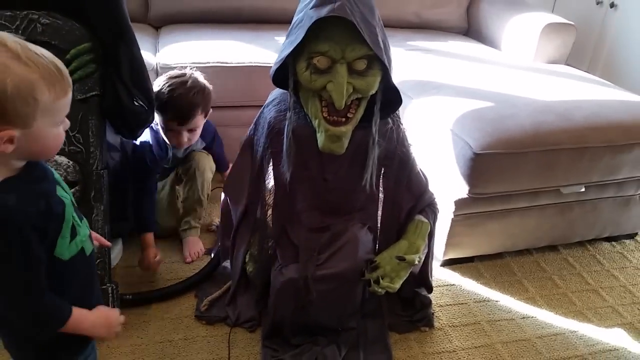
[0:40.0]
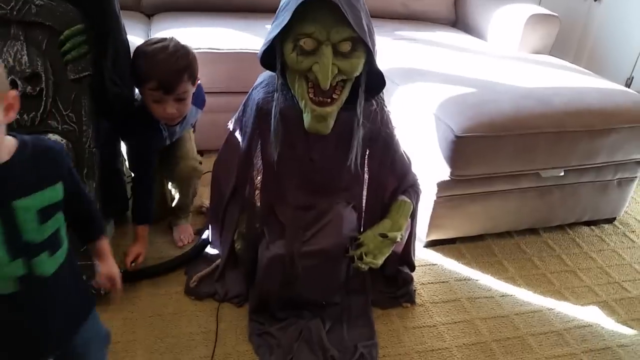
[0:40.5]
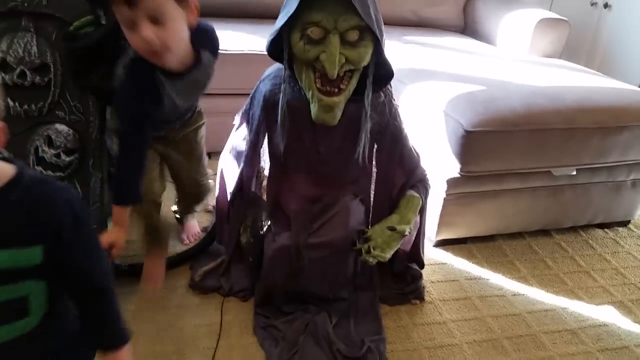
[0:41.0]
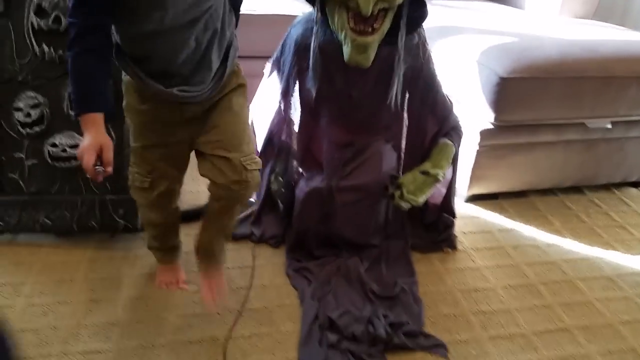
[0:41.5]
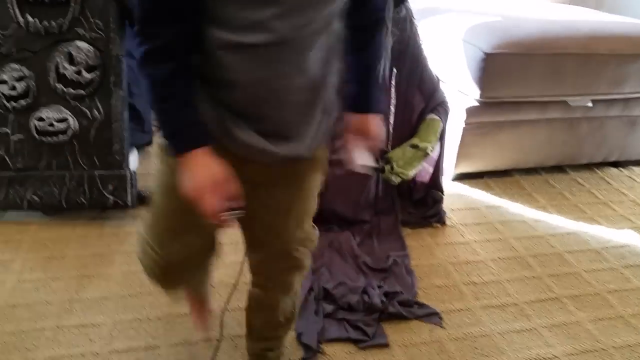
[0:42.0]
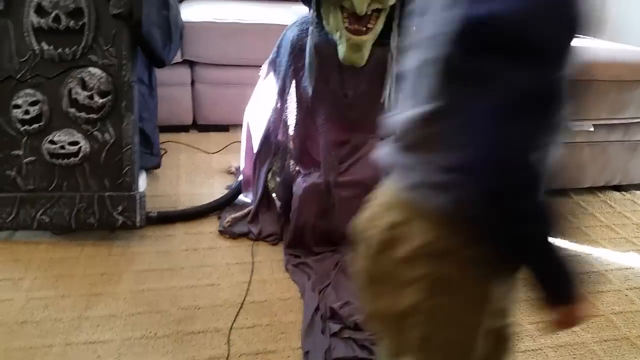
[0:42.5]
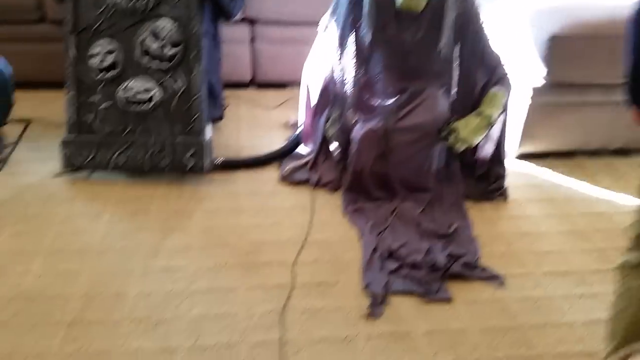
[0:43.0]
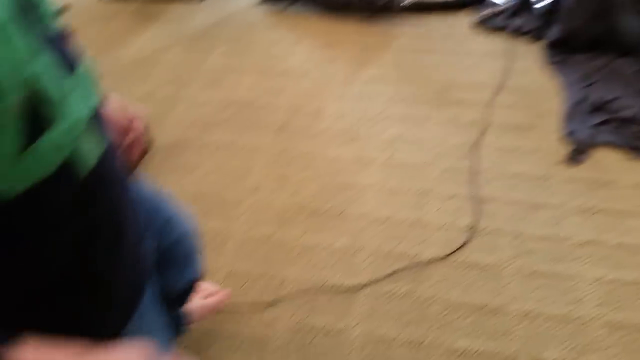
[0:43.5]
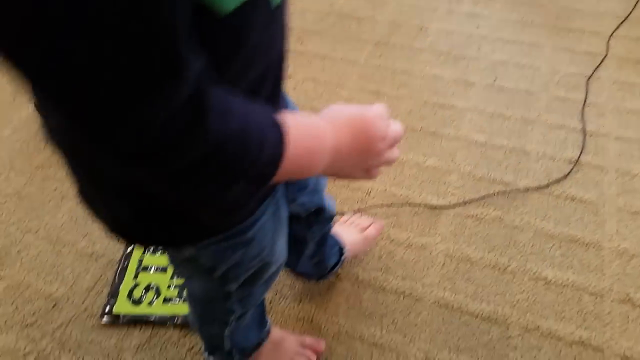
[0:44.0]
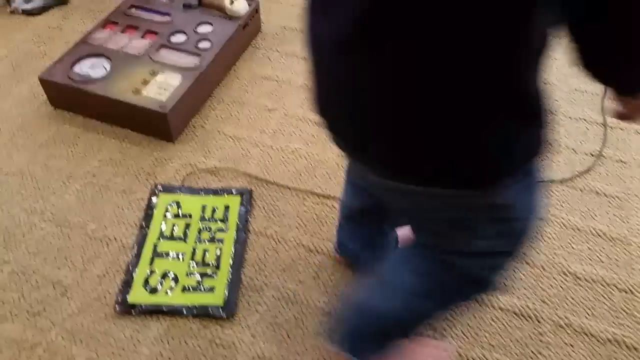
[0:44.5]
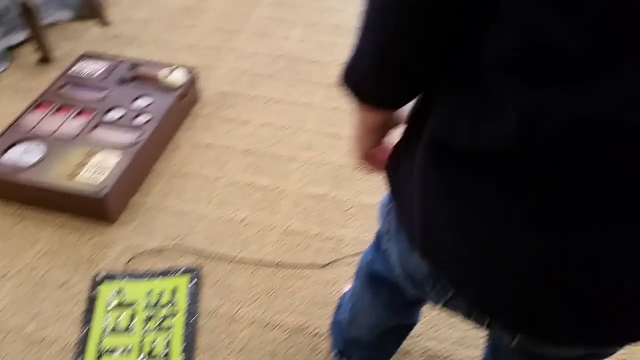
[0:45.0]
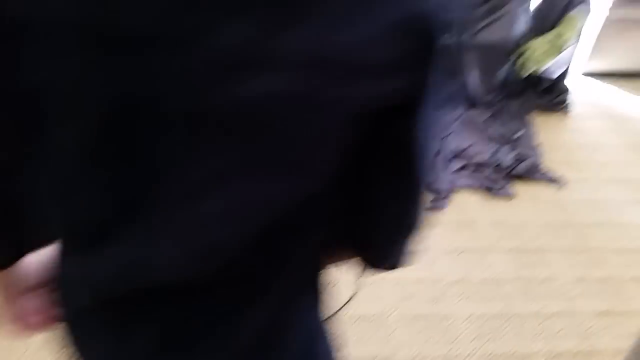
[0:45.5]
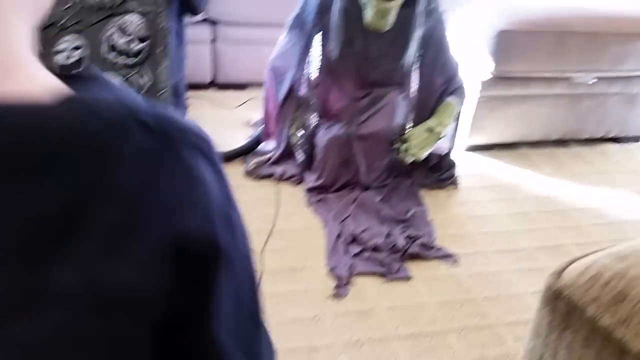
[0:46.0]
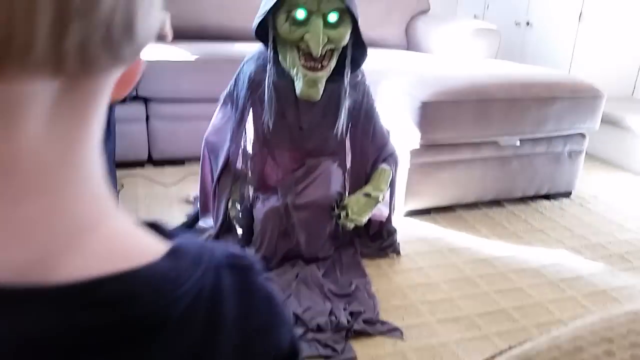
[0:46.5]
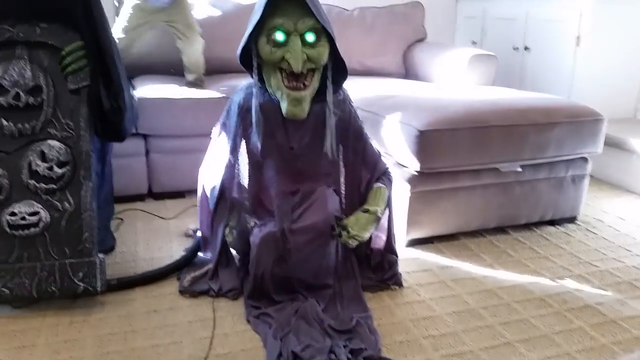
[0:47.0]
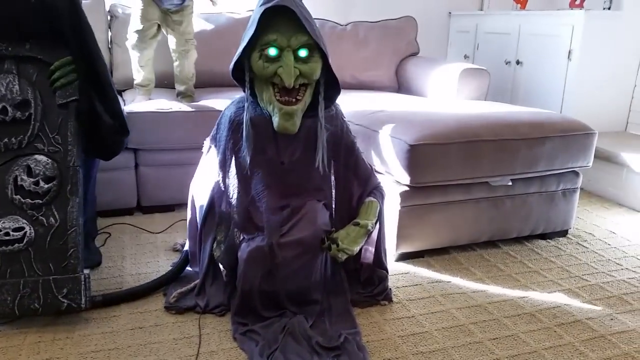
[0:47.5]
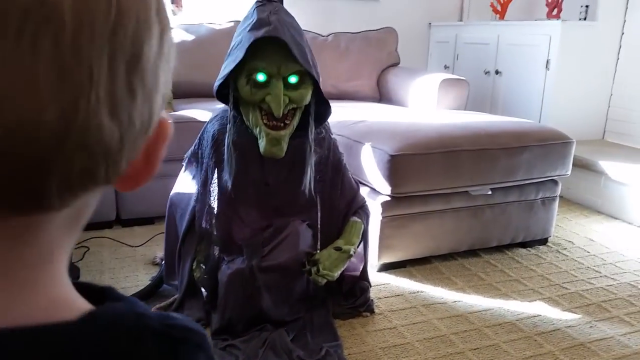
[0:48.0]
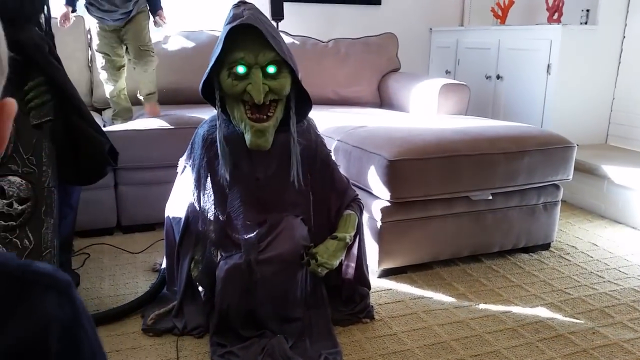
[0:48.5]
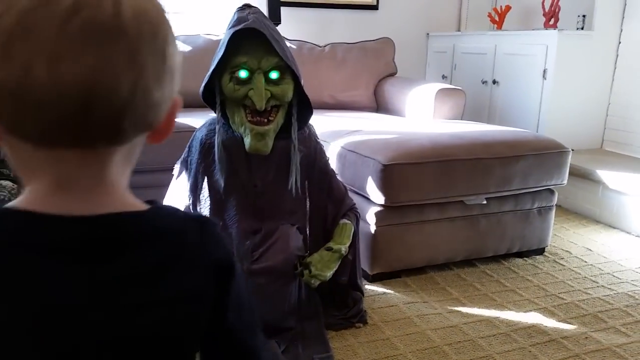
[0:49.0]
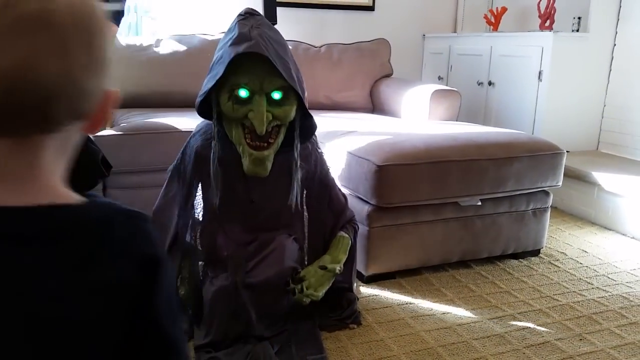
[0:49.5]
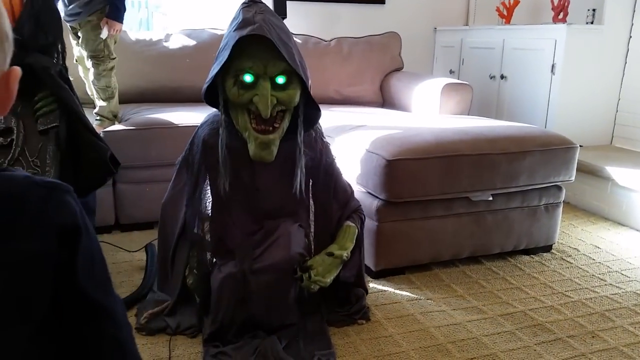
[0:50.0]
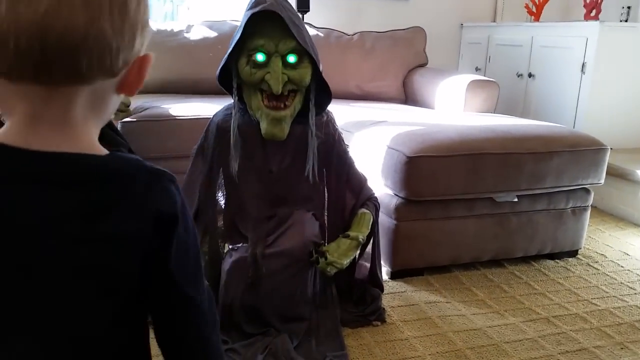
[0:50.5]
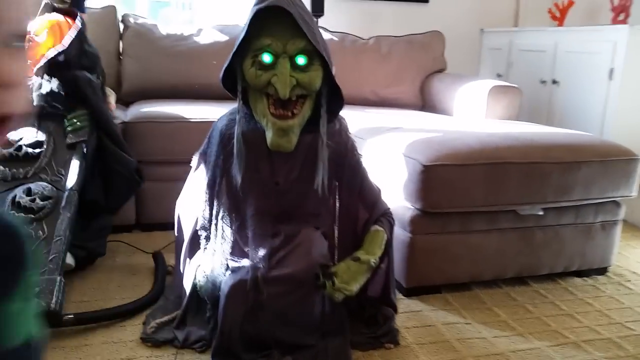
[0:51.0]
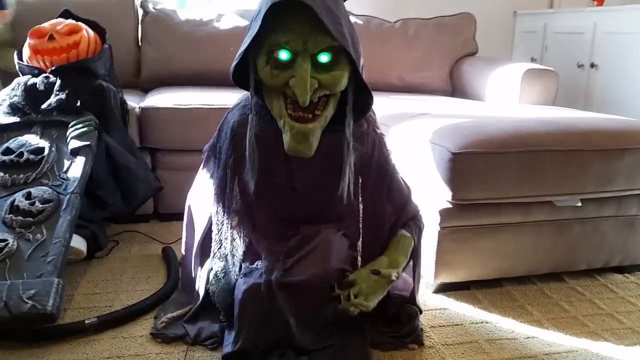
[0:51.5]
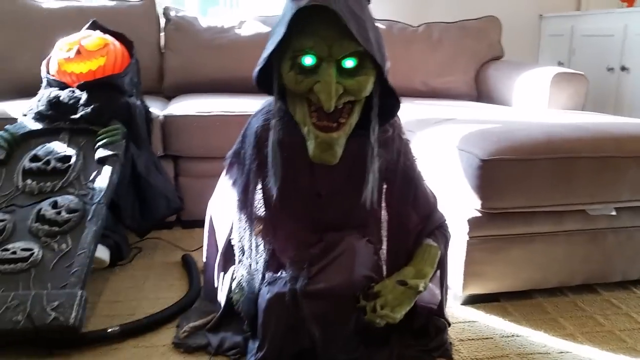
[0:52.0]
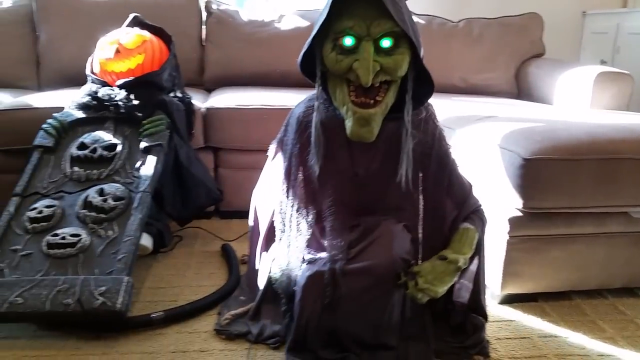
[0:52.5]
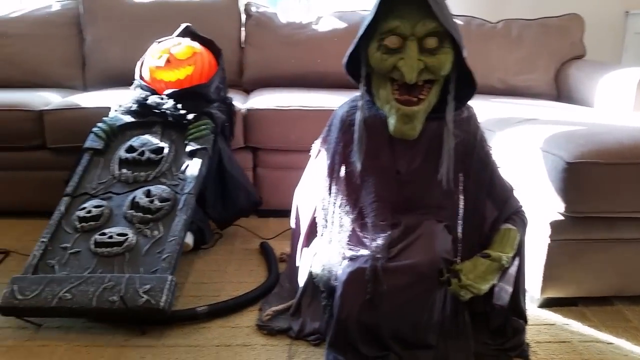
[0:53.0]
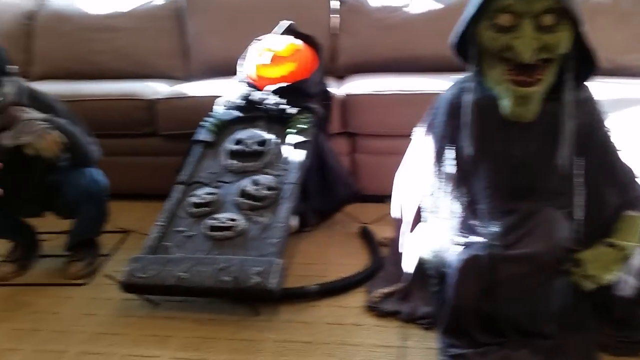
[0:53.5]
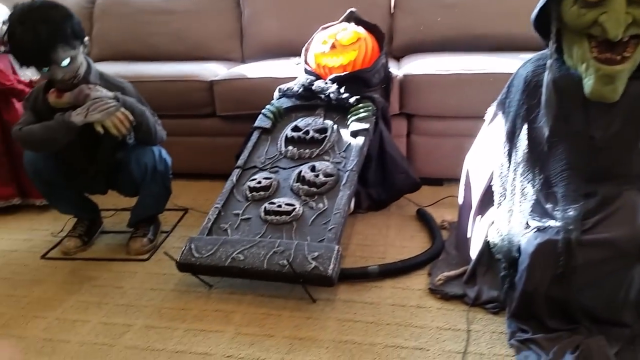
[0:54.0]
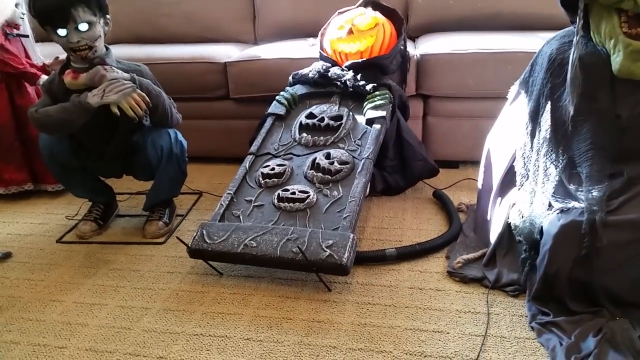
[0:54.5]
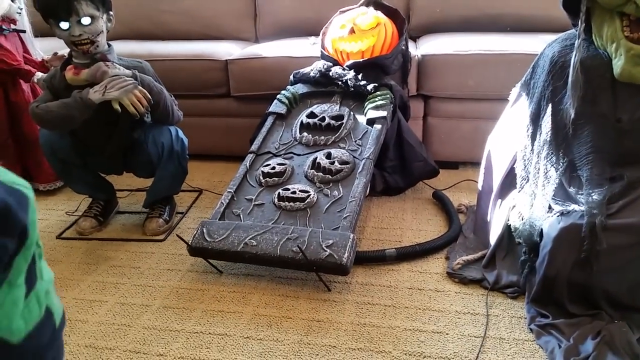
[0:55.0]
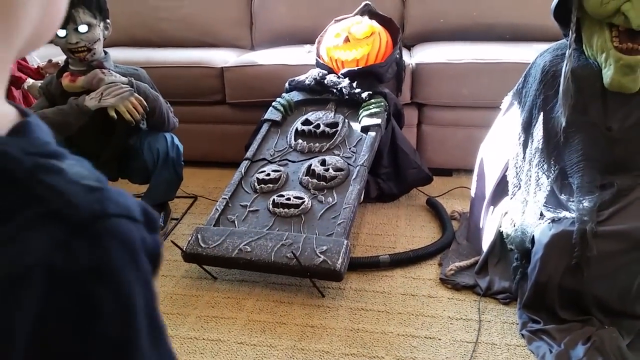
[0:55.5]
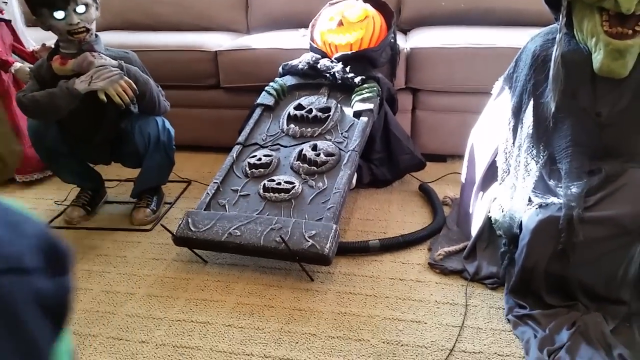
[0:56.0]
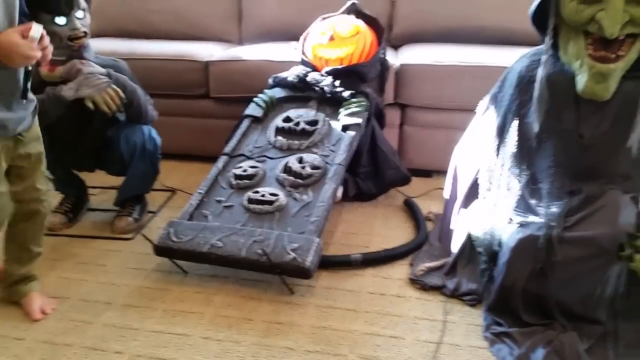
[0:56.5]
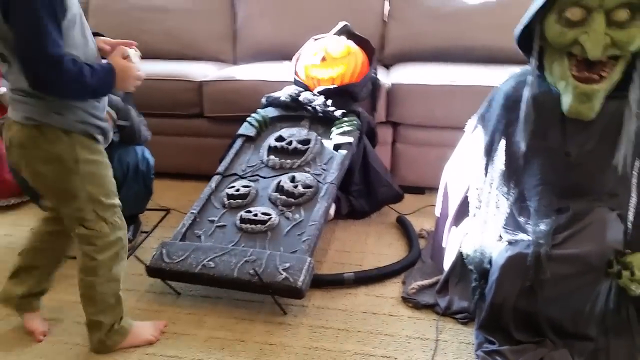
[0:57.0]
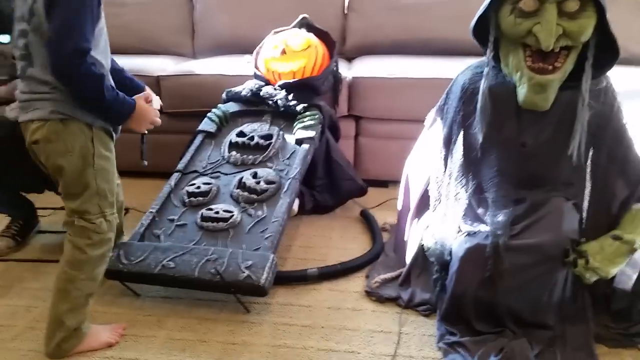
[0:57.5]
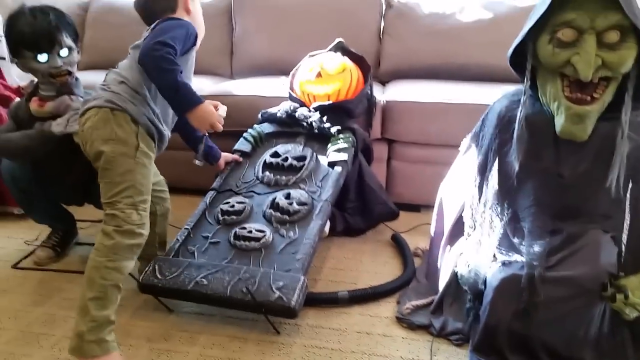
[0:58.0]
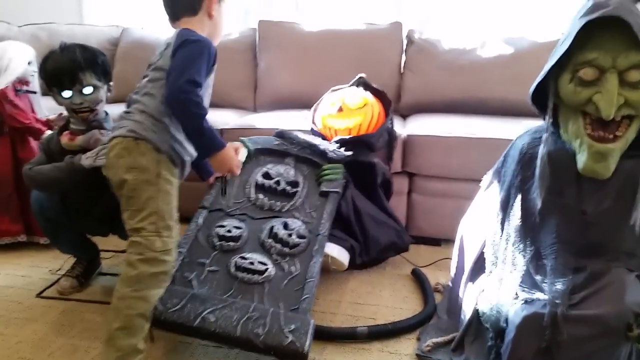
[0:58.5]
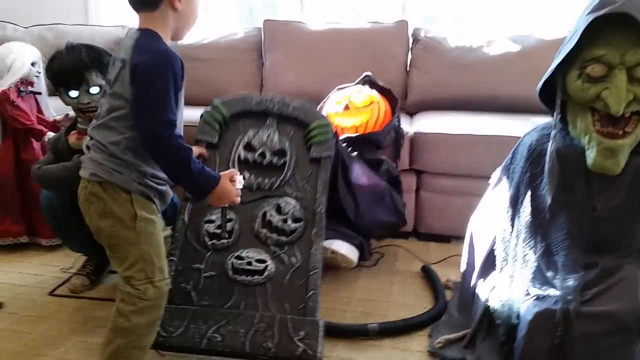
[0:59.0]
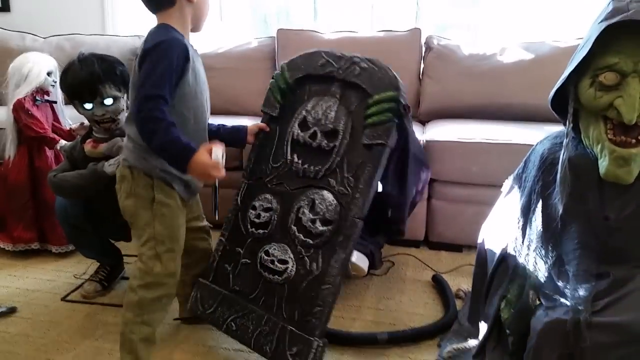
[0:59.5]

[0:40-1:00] The witch's eyes do glow, a very vibrant green. She appears to cackle when the kids step on a little thing attached to a cord that connects to her; it says "step here" in yellow and black. The cords from the other items are also visible. The gravestone gets knocked over, apparently by the brown-haired boy while the jack-o'-lantern was coming up, and he picks it up. Once it is fixed, one of the children is shown up on top of the sofa jumping around. On the left side, the boy animatronic with the glowing eyes puts his head down and lifts it up; his eyes appear to glow the same as the witch's.